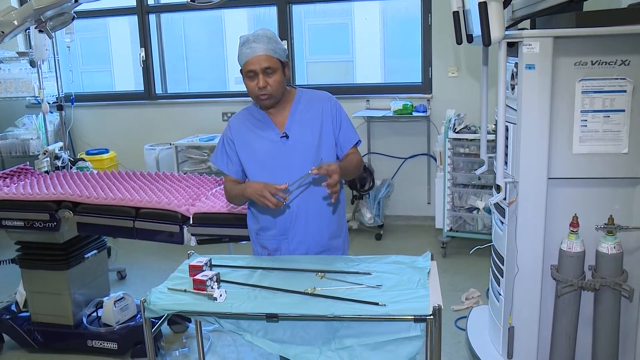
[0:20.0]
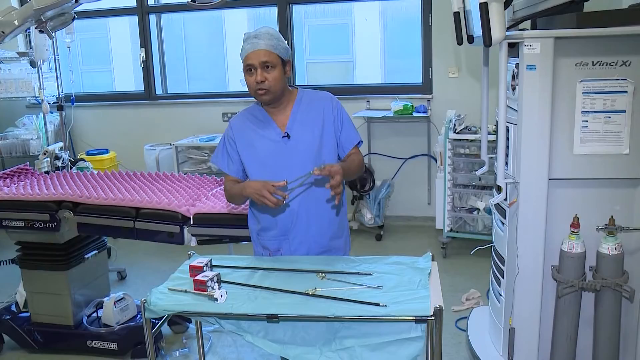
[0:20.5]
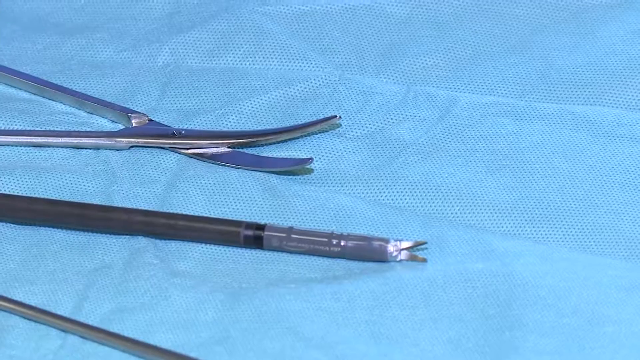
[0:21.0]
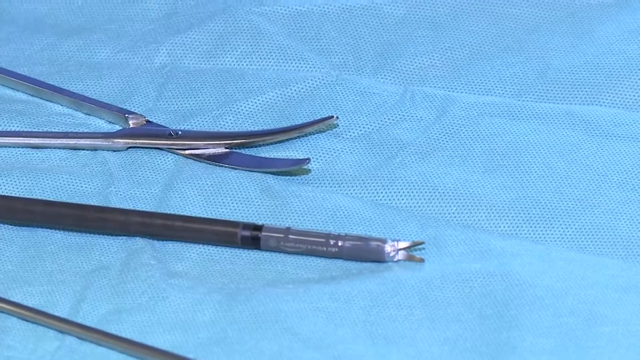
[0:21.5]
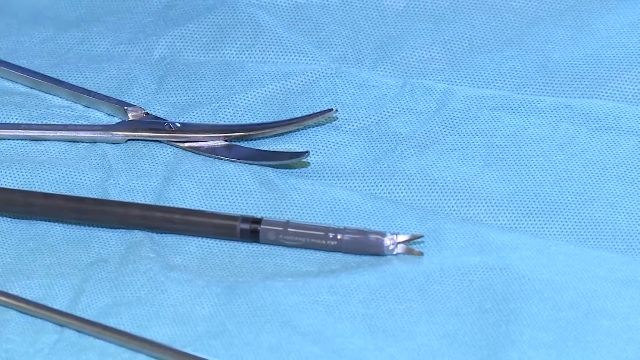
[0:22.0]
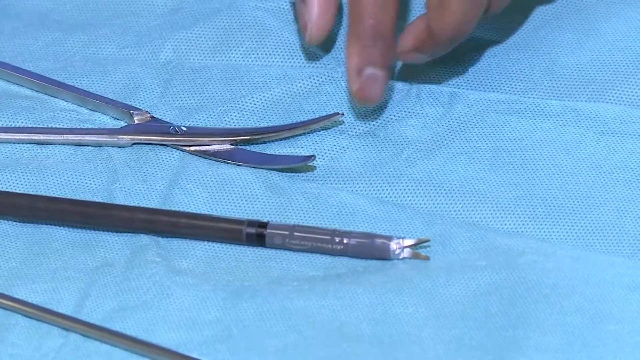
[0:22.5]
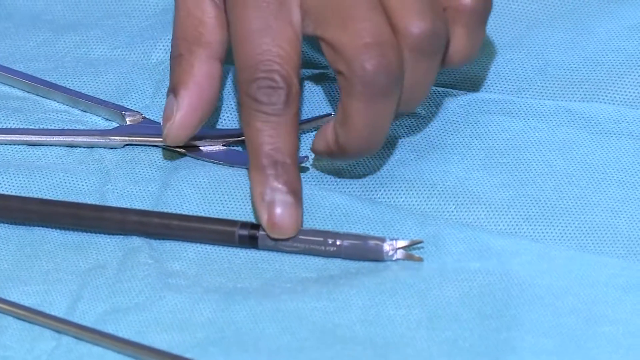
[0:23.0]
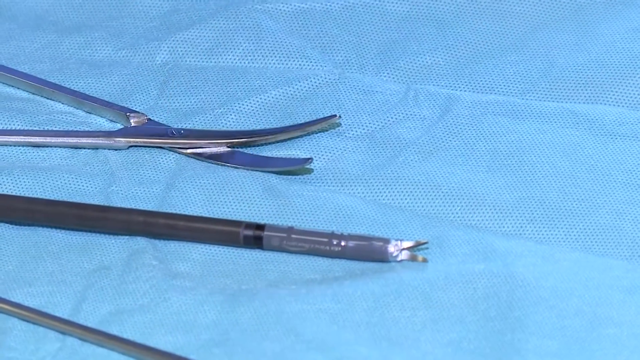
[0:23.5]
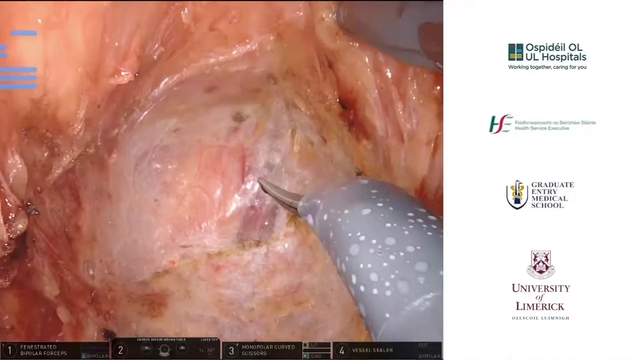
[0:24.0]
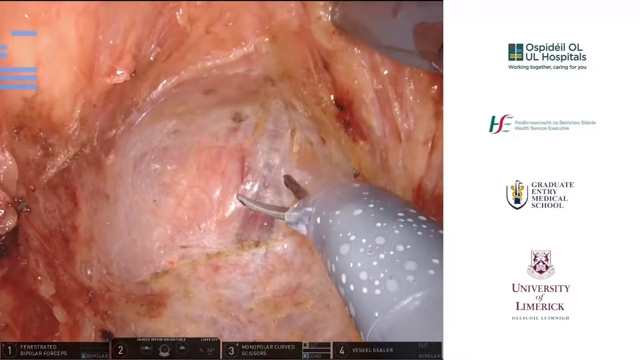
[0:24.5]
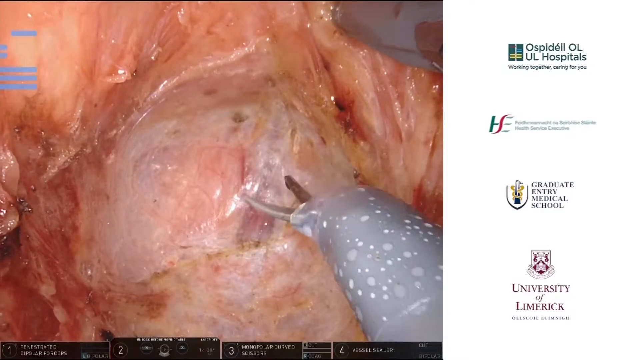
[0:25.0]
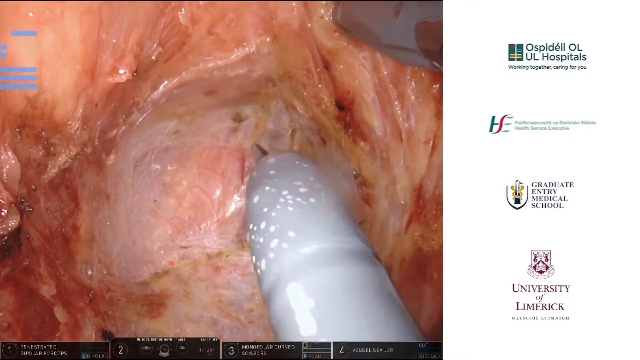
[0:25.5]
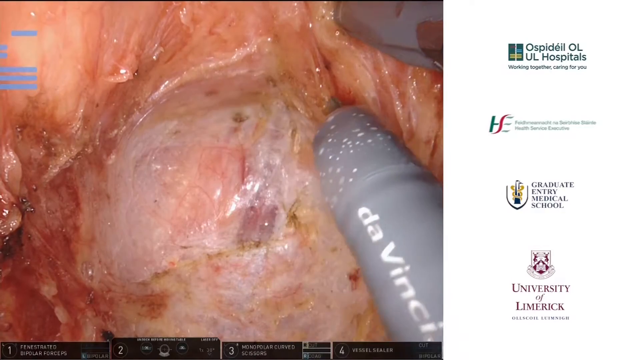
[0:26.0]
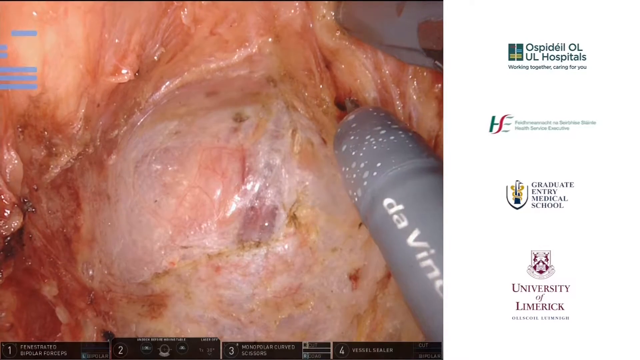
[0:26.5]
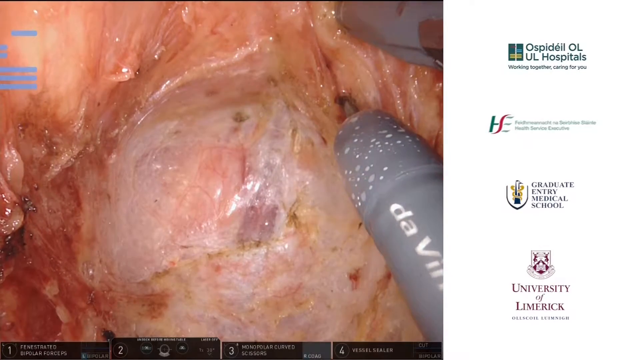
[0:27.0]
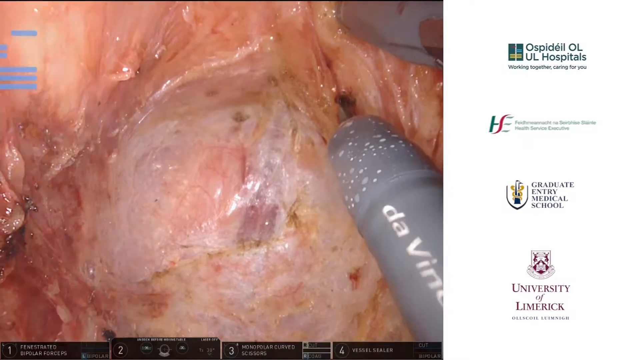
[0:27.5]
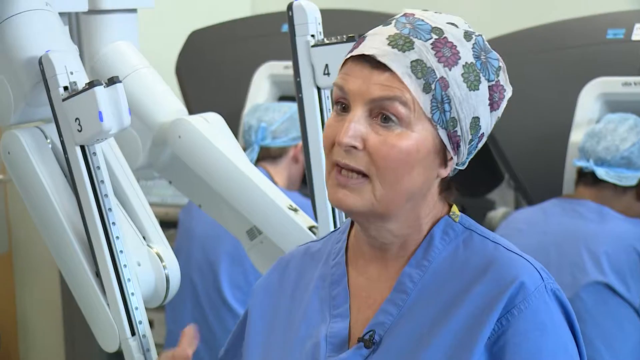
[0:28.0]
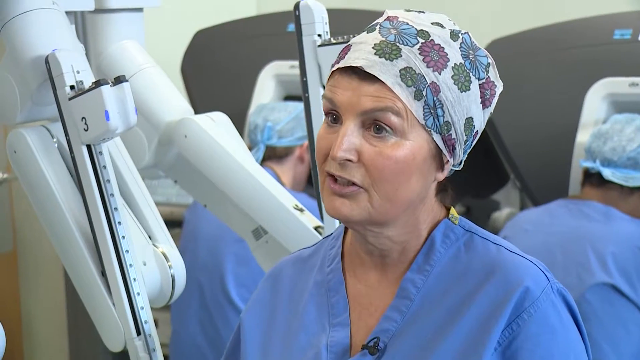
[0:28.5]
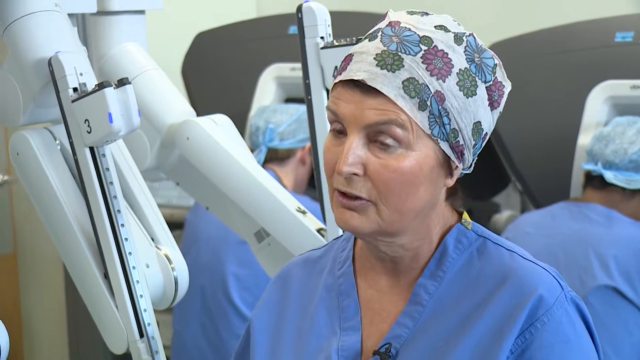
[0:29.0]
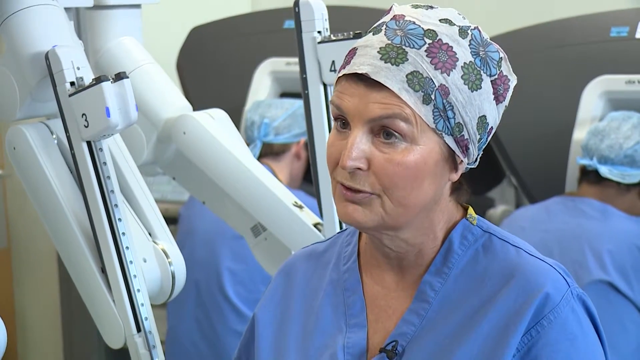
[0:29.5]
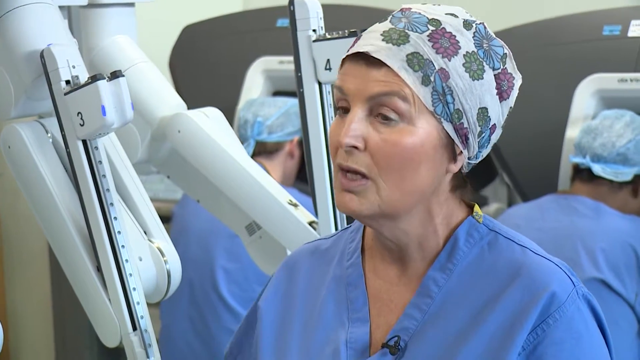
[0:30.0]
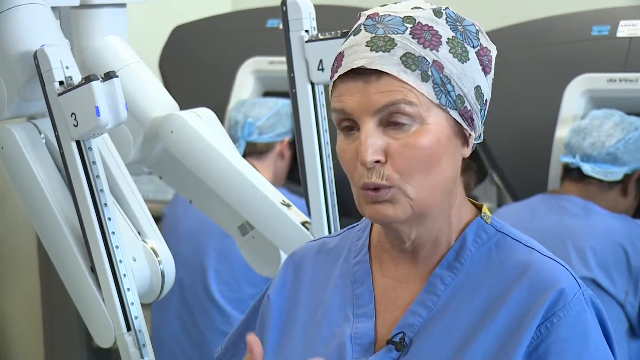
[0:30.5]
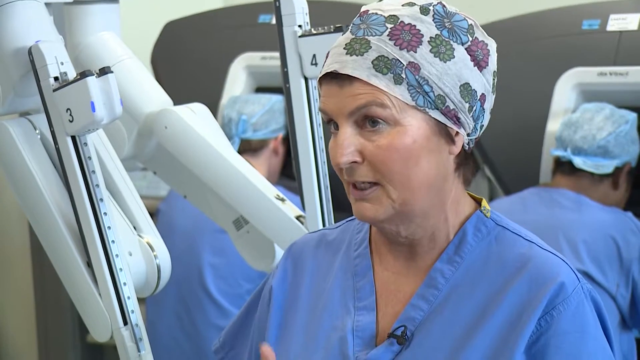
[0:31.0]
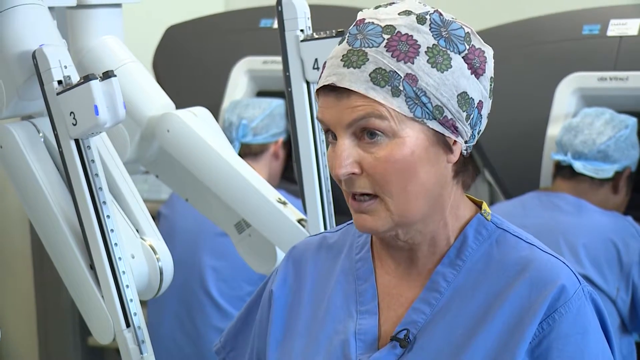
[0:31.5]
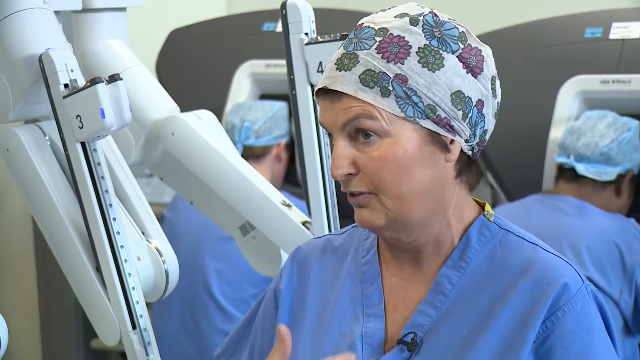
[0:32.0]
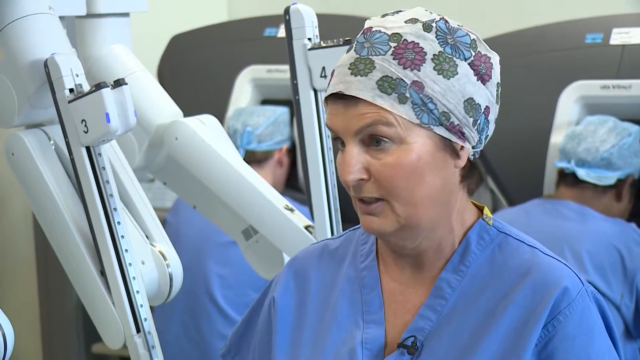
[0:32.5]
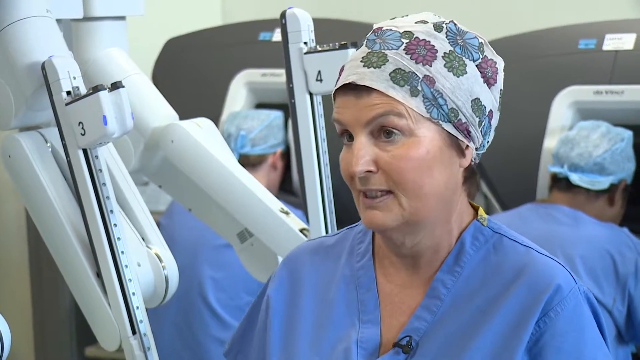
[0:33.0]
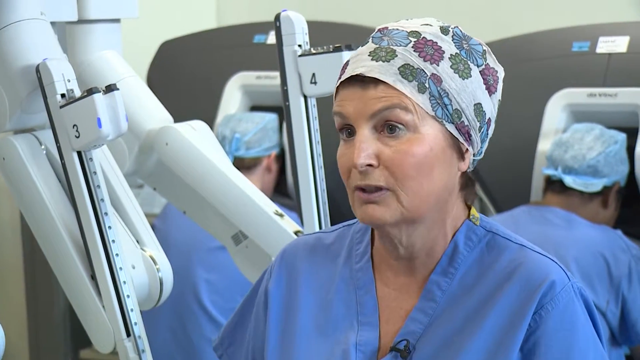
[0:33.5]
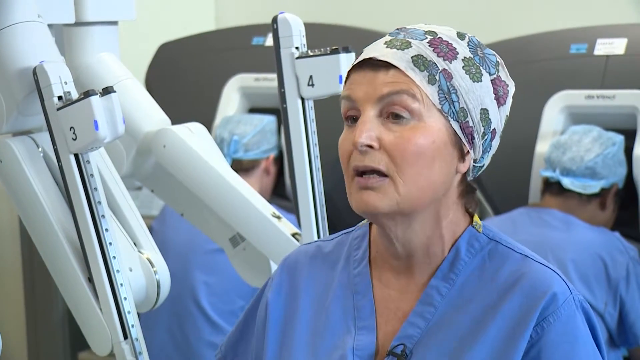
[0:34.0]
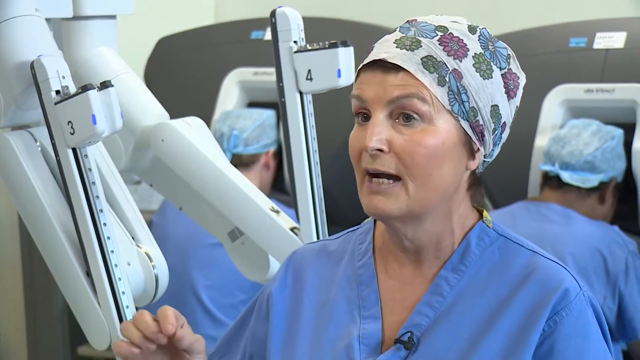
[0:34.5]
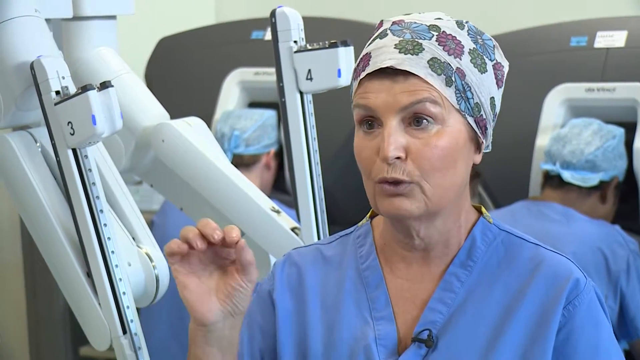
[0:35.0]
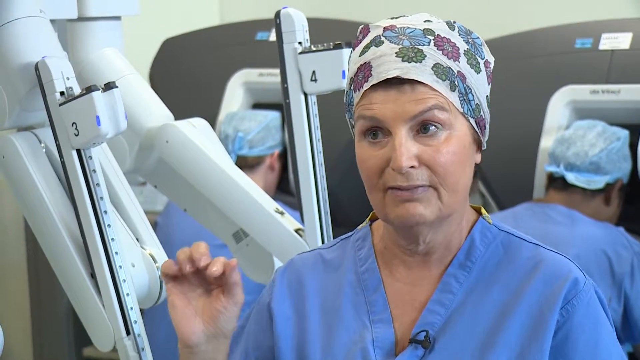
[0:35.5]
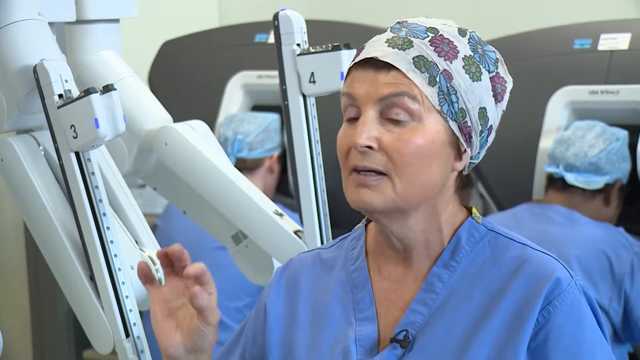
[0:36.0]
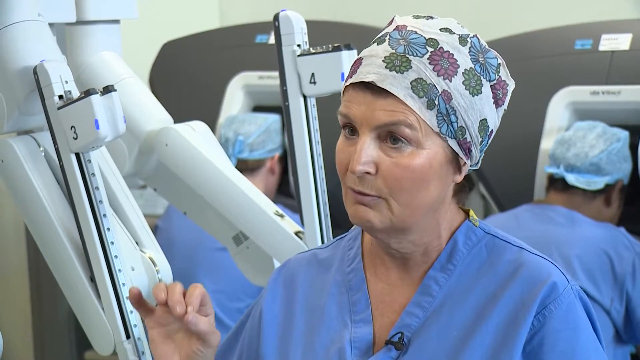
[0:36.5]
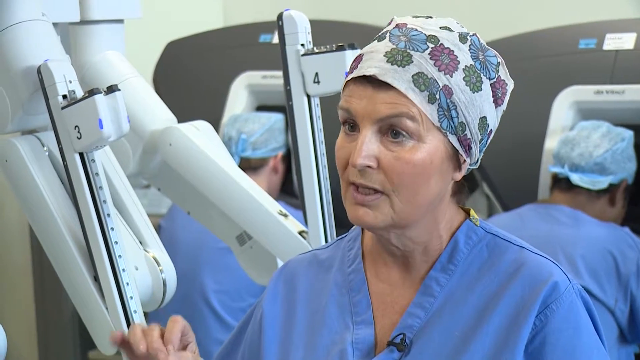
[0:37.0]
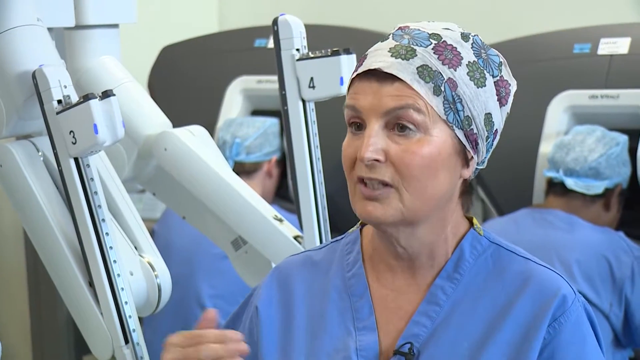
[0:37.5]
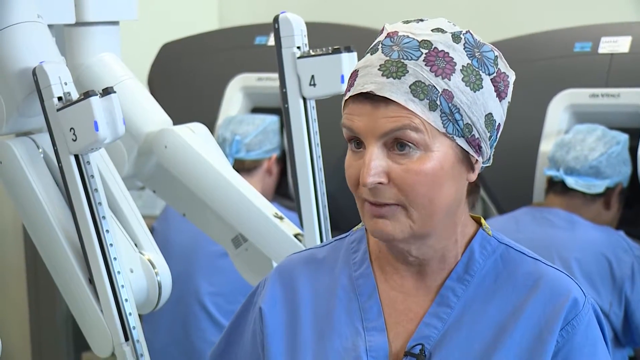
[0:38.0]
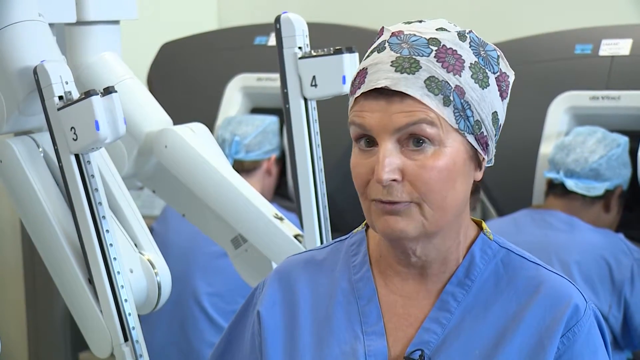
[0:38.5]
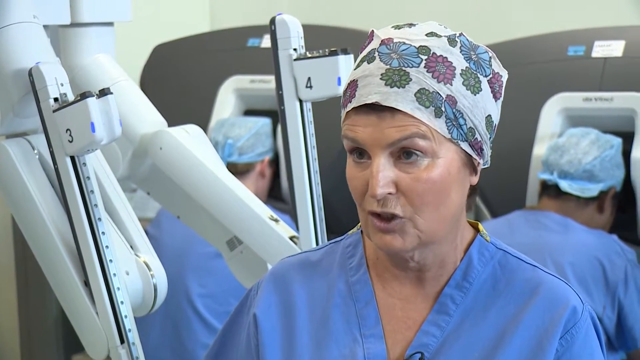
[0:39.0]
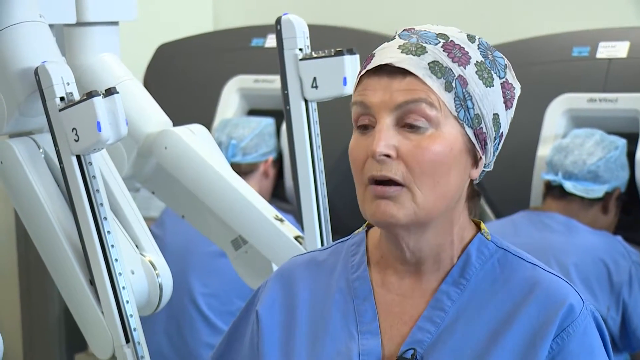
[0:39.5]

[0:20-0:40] A medical professional in blue scrubs and a blue cap is in a room. In a close-up, he reaches out to grab one of his tools, which are on a blue sheet, and then pulls his hand back. An overhead view shows a machine performing a surgery; the machine moves a gray tool to the right side of the screen, and a small amount of steam rises as it operates on the flesh. A female medical professional in a white cap with floral patterns and blue scrubs faces left and speaks calmly to the camera people. Behind her, two other professionals, also in blue caps and blue scrubs, face right and work in the background. She raises her right hand to emphasize what she is saying.